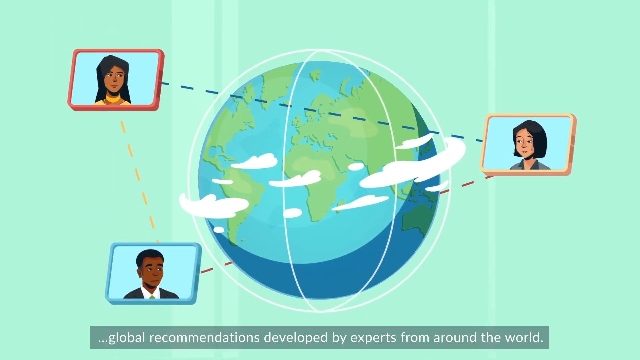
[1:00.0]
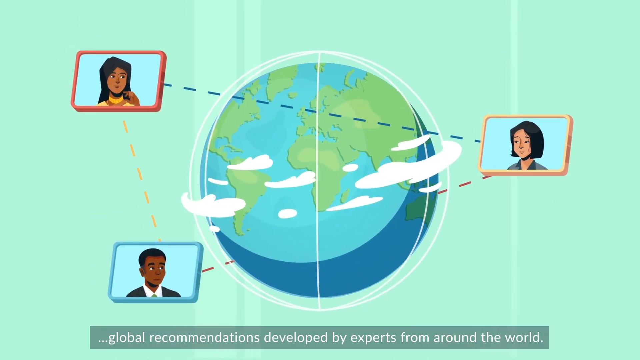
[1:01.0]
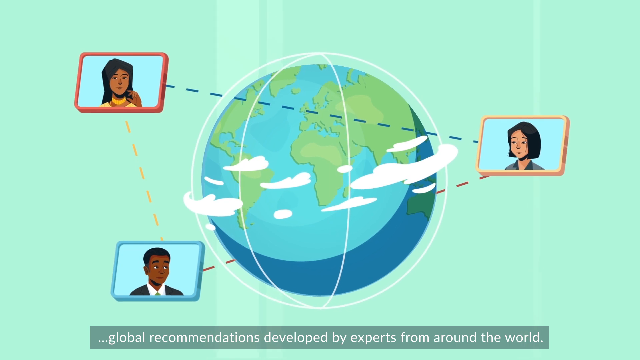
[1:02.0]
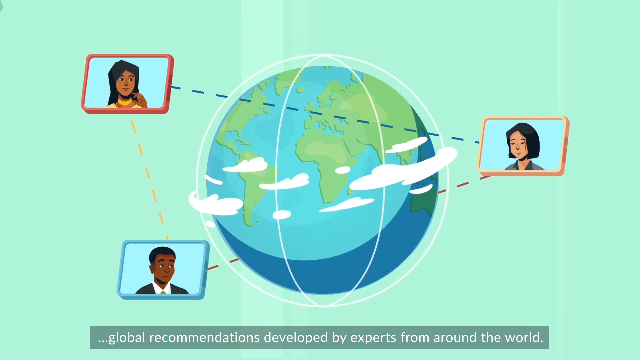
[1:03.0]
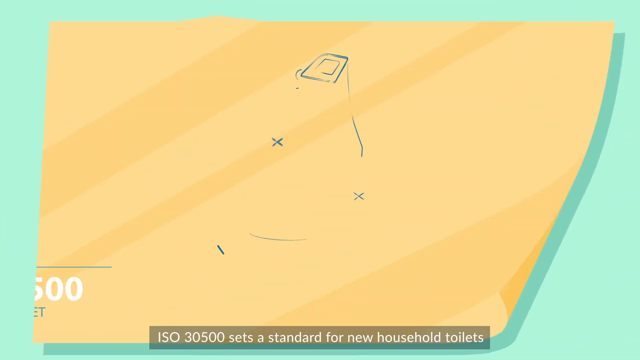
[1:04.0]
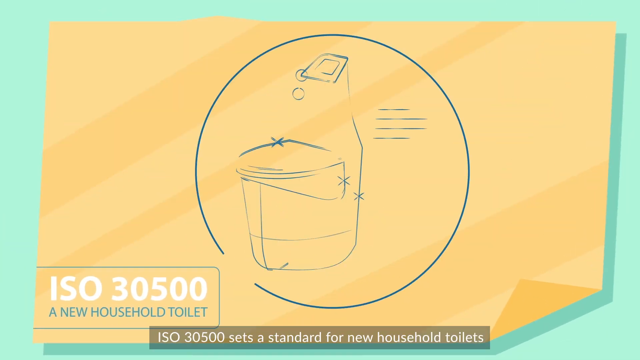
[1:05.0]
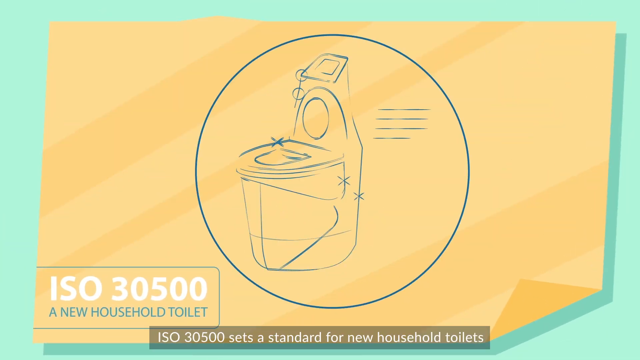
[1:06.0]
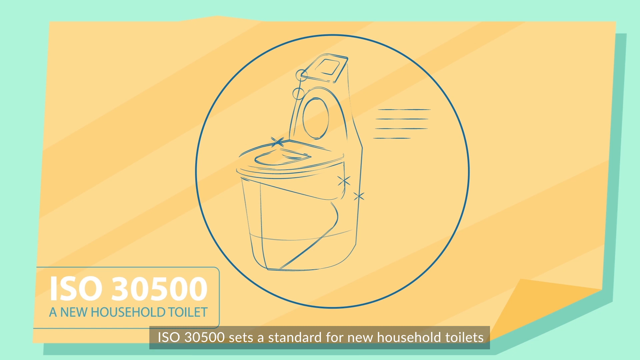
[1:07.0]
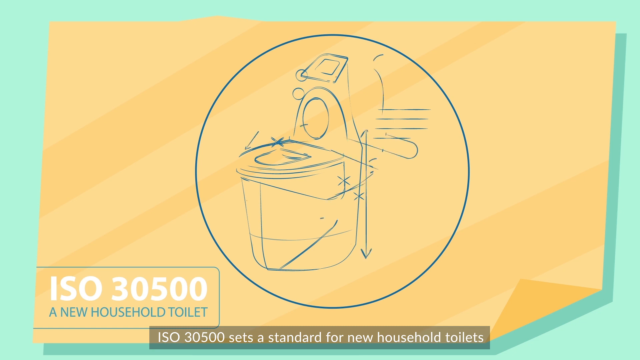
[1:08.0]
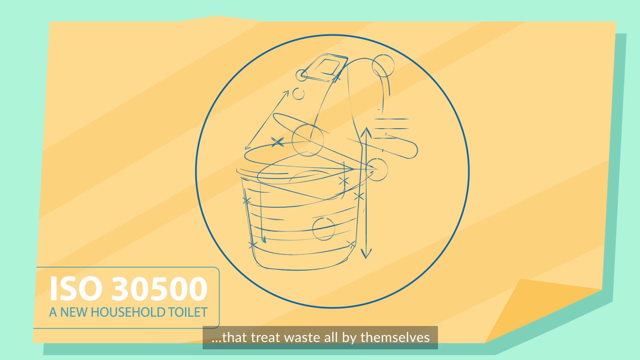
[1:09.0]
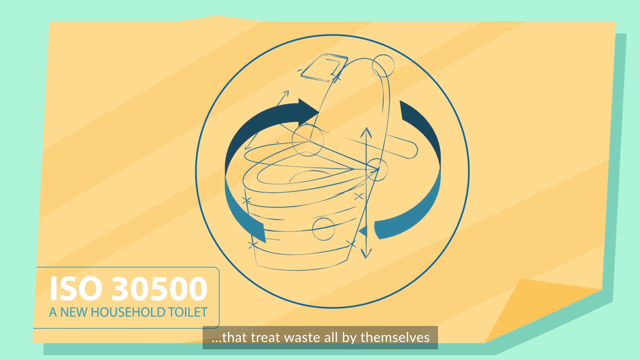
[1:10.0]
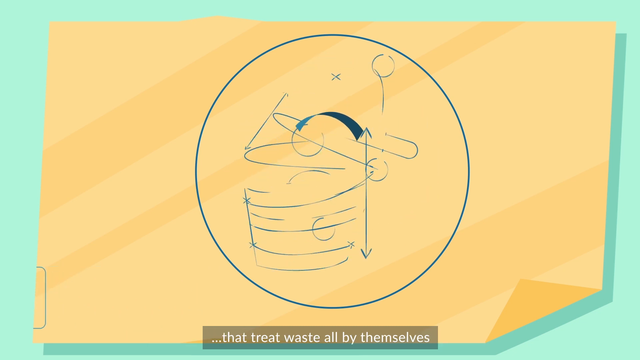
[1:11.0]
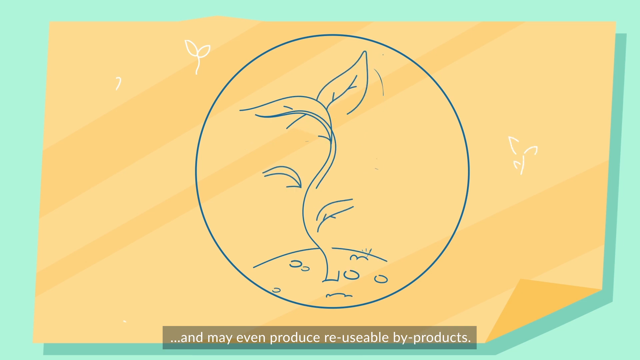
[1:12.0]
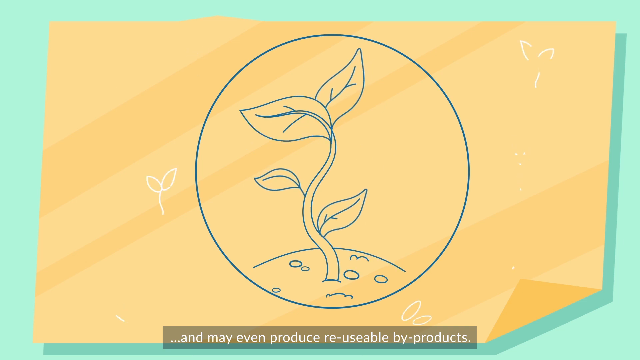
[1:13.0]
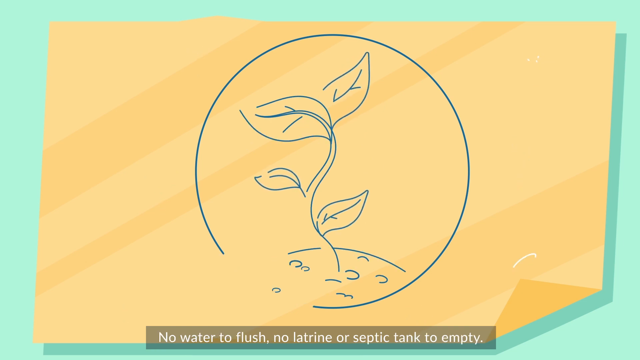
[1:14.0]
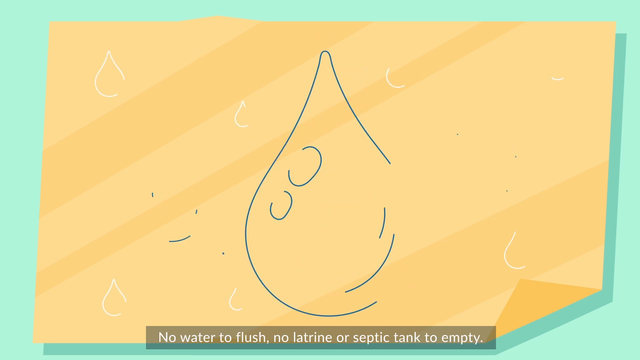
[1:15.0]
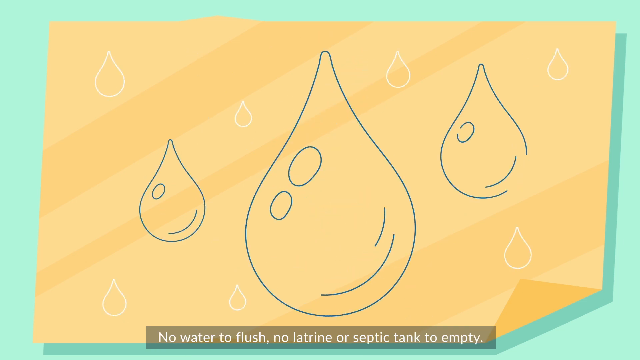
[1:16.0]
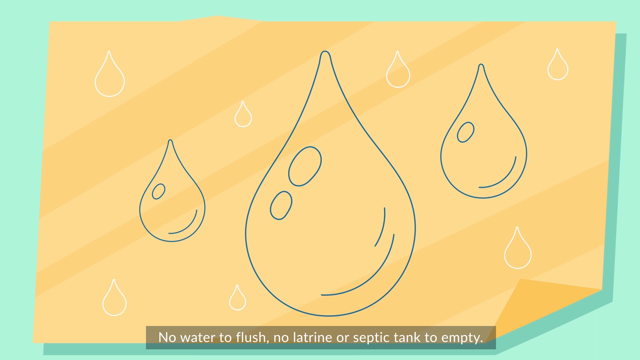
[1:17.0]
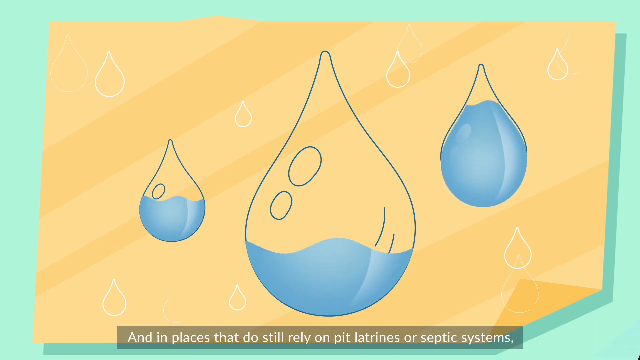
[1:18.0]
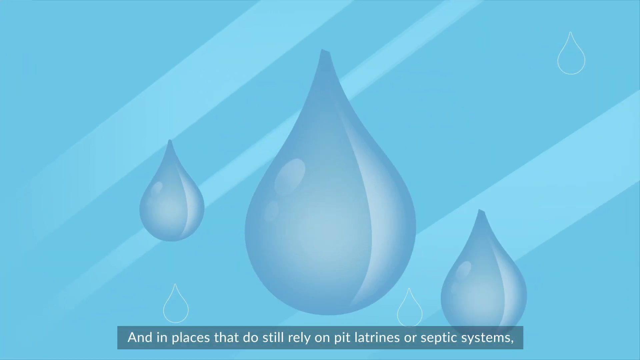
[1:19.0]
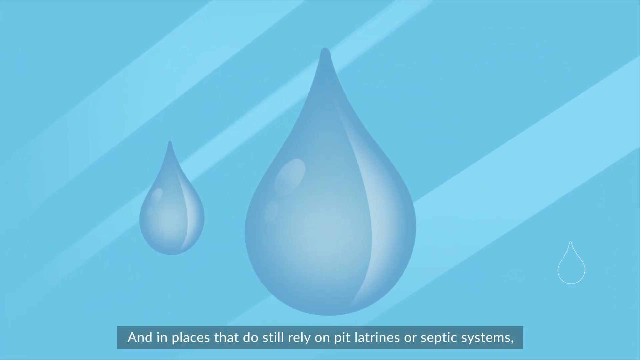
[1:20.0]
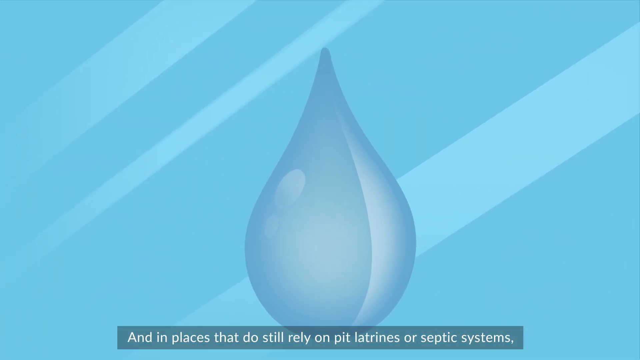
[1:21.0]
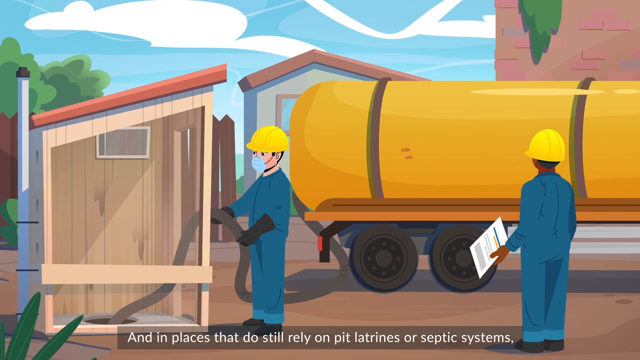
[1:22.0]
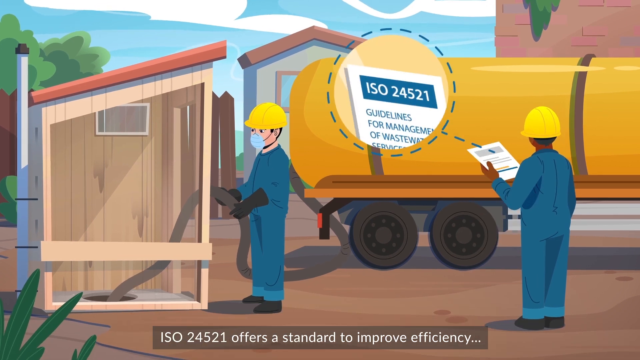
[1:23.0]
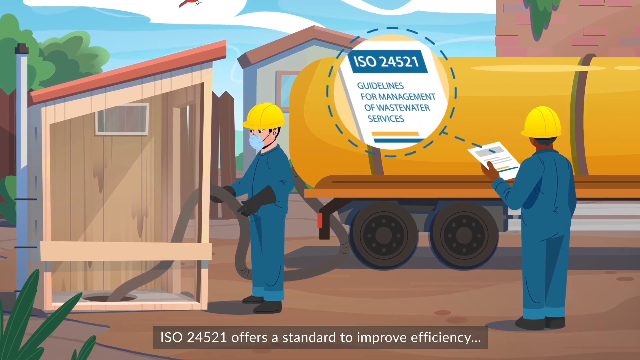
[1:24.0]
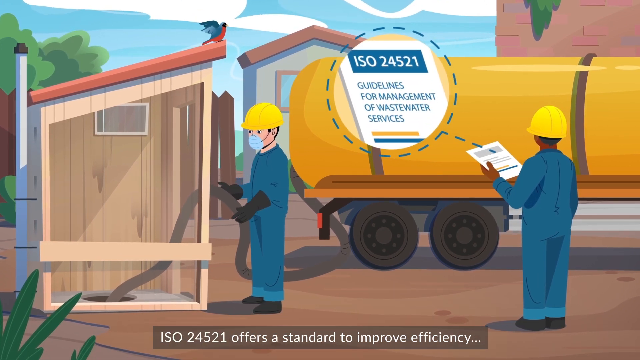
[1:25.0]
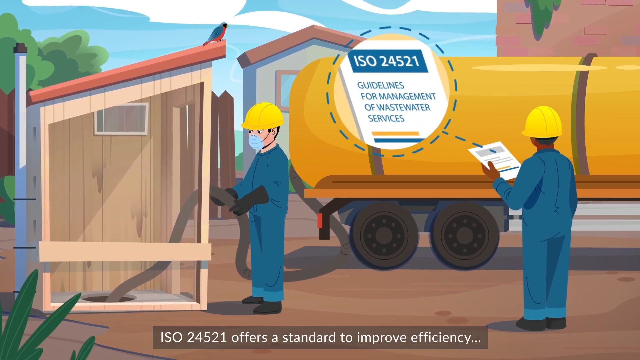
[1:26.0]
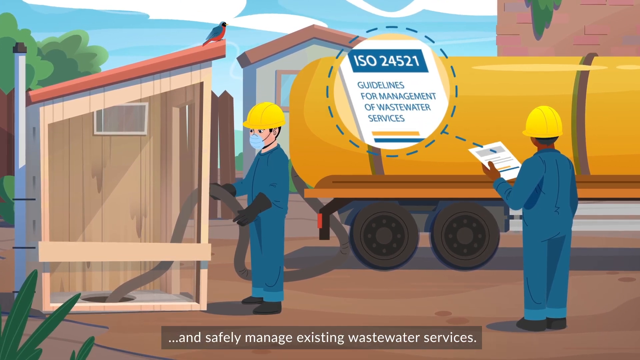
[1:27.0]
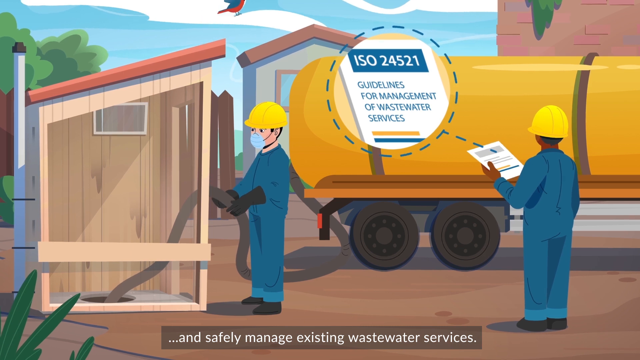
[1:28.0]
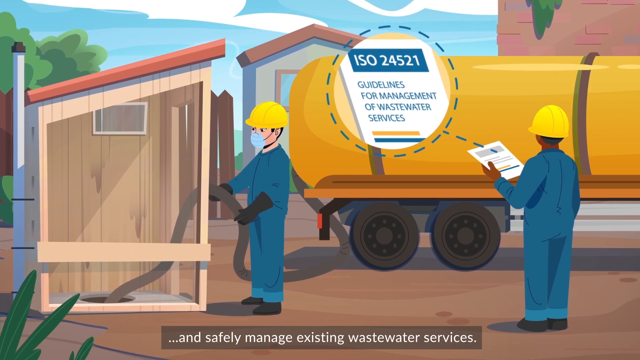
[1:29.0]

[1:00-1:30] Many people of different types appear, wearing different types of clothes. The video is about toilets, and it shows that when there is no water, the toilet cannot be flushed.